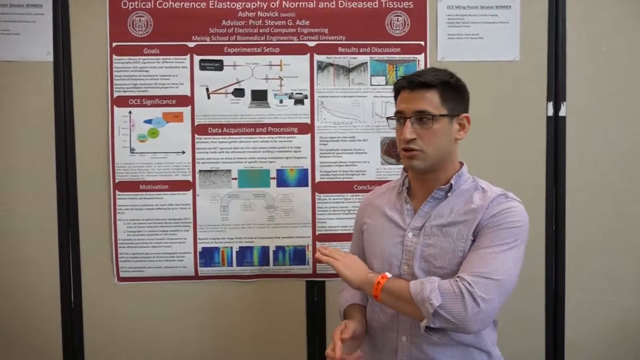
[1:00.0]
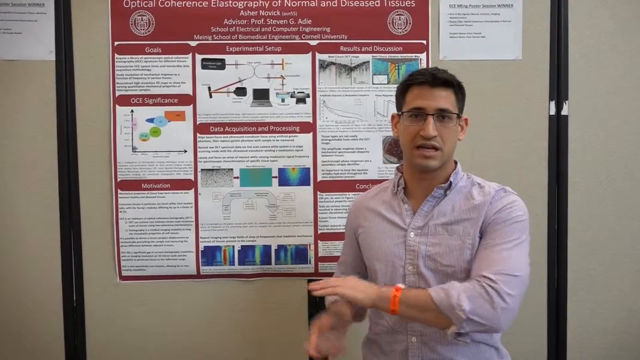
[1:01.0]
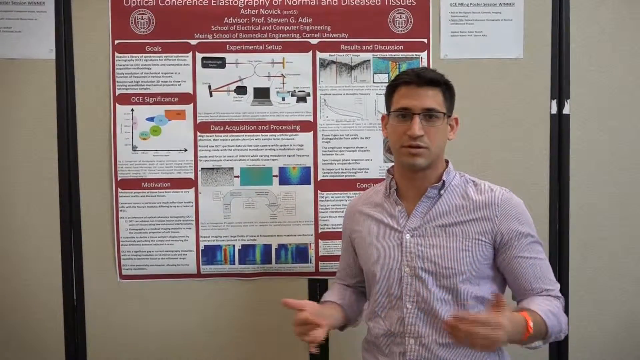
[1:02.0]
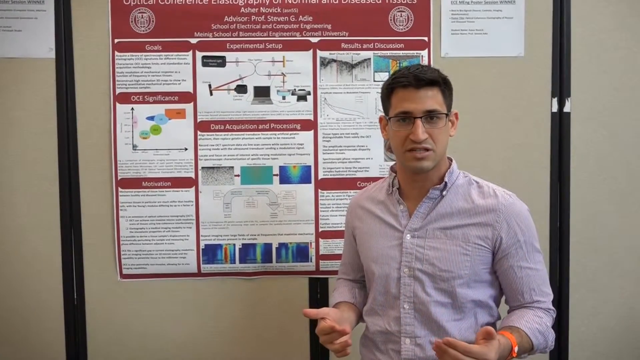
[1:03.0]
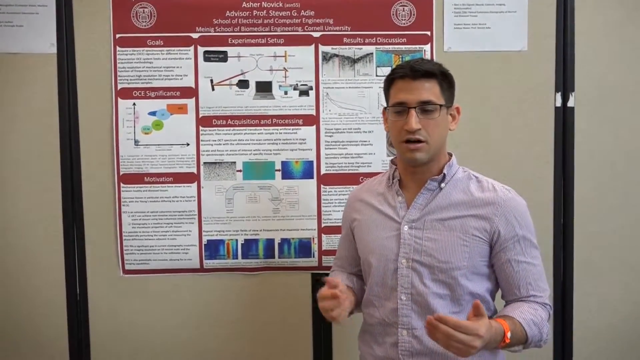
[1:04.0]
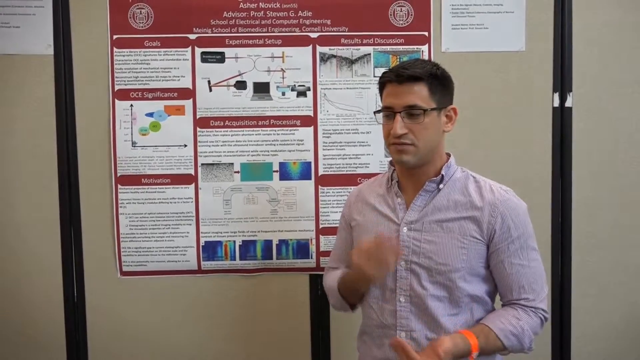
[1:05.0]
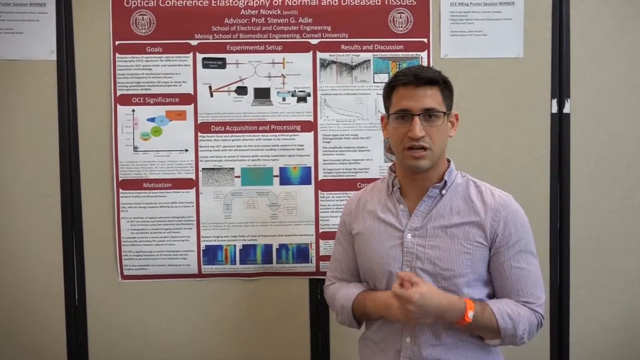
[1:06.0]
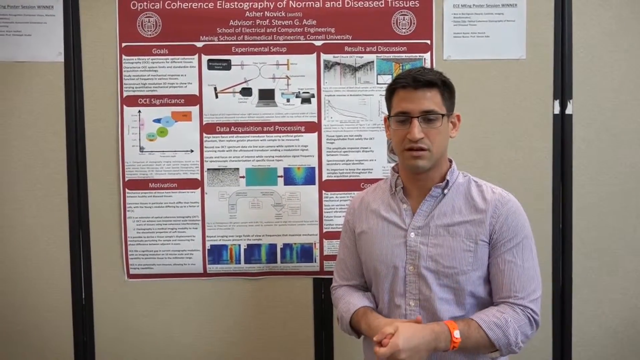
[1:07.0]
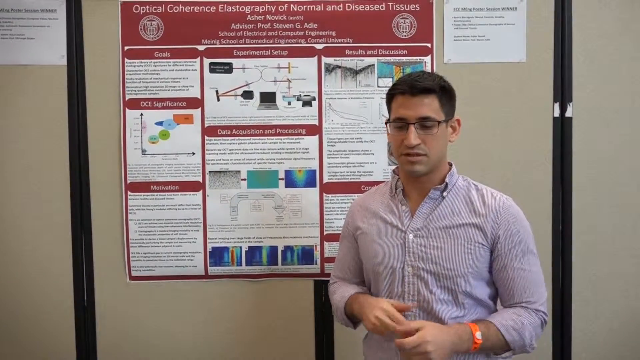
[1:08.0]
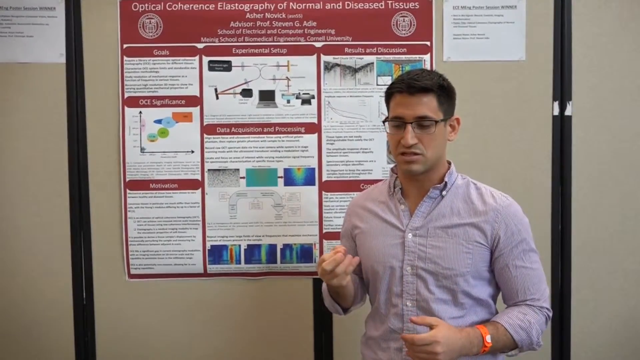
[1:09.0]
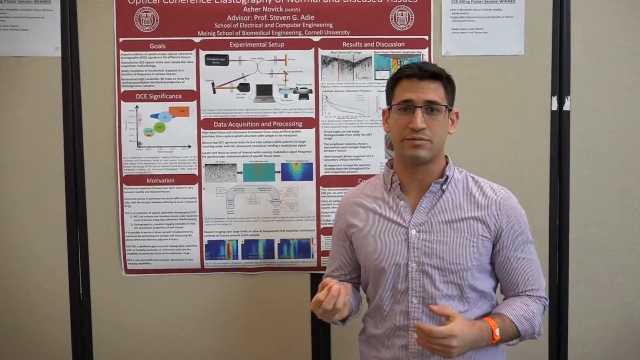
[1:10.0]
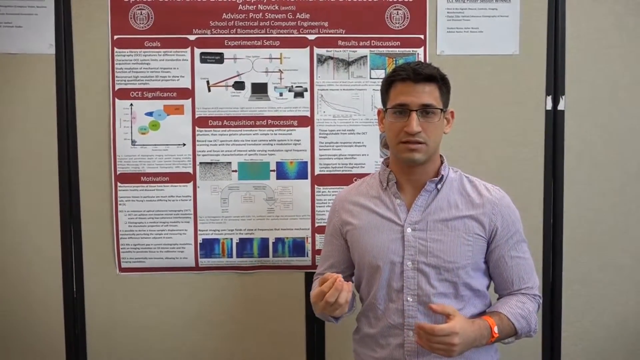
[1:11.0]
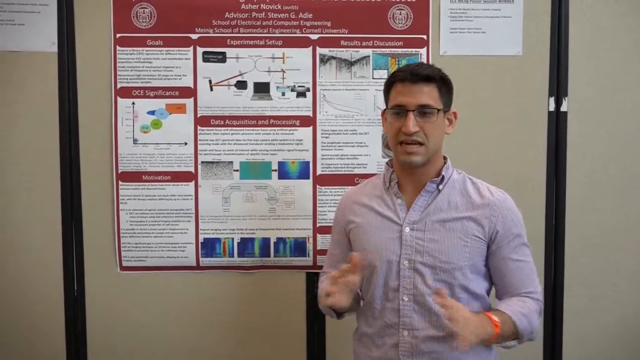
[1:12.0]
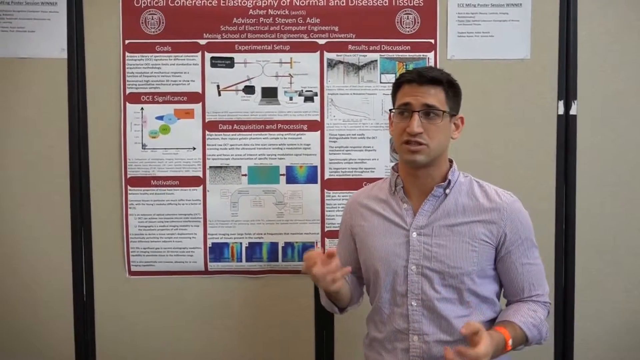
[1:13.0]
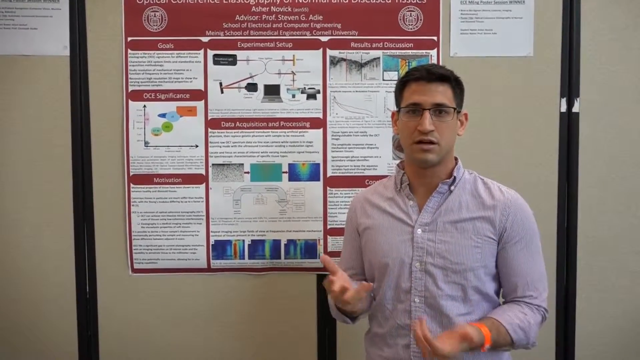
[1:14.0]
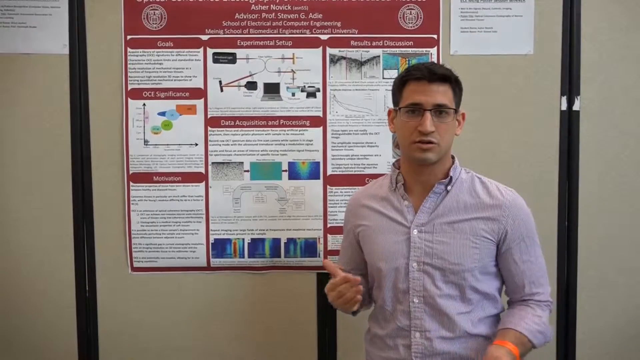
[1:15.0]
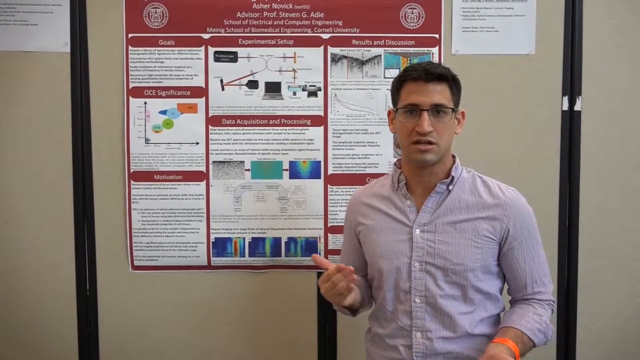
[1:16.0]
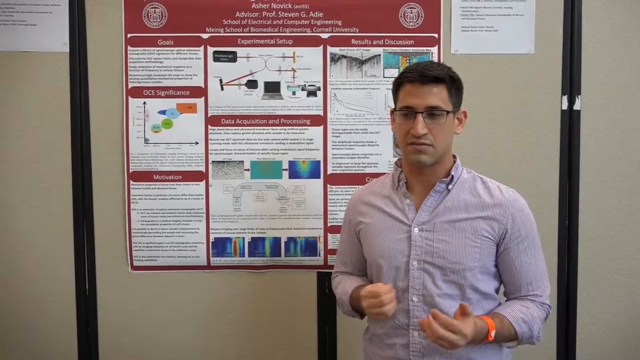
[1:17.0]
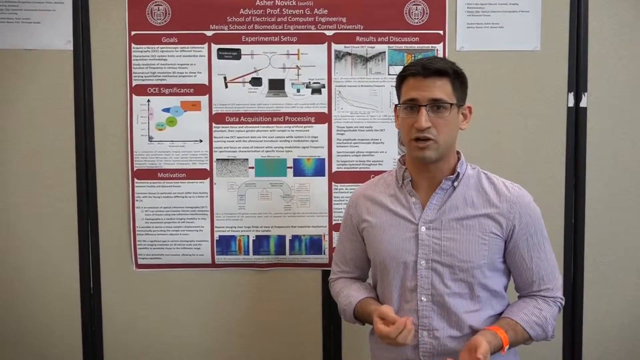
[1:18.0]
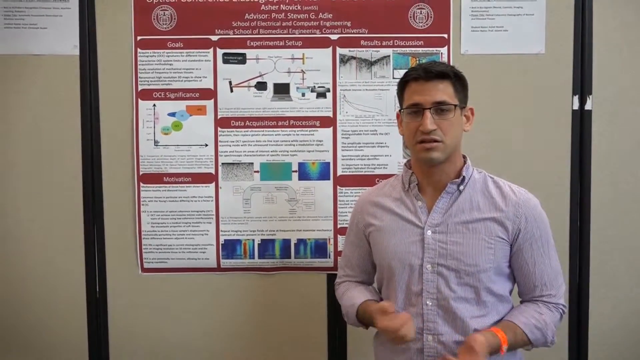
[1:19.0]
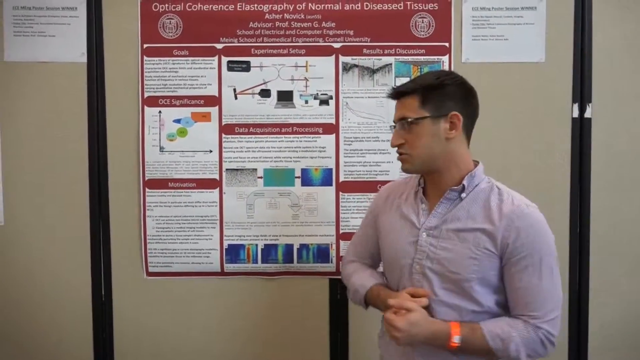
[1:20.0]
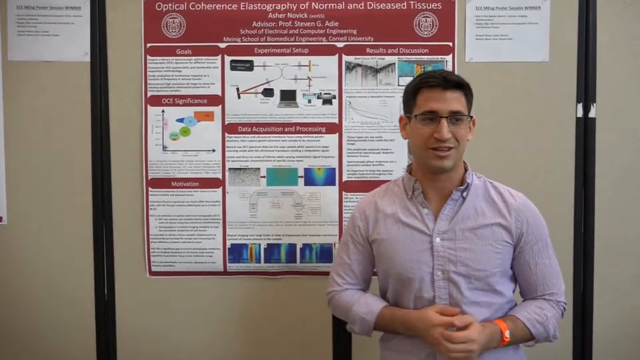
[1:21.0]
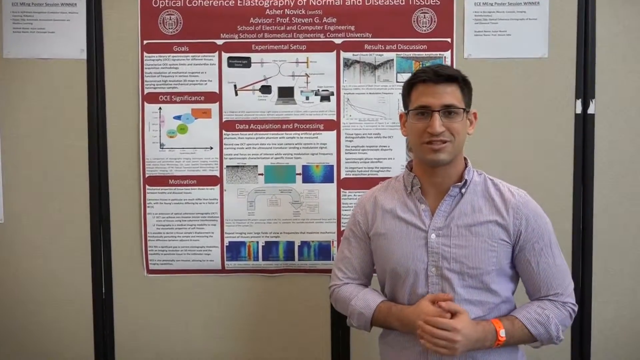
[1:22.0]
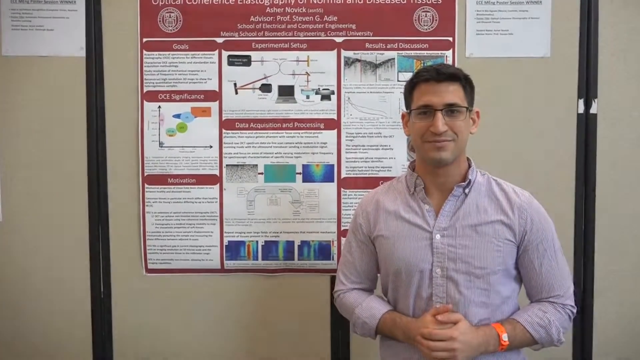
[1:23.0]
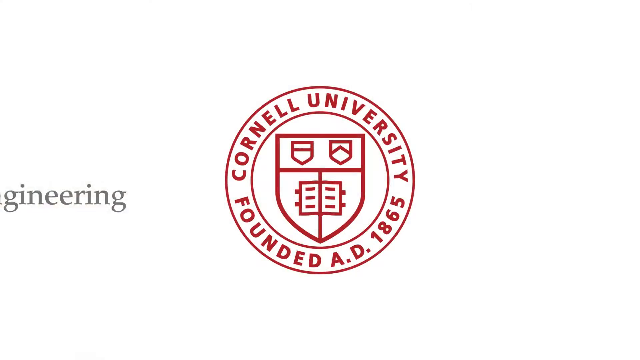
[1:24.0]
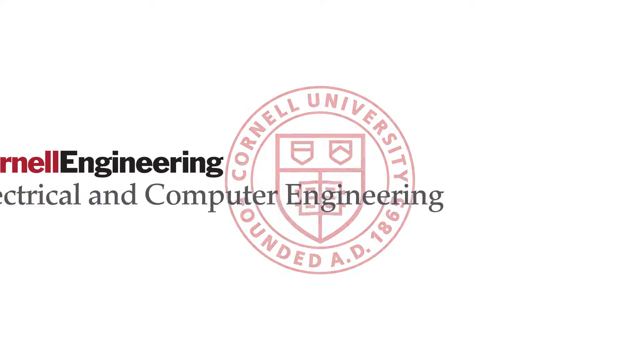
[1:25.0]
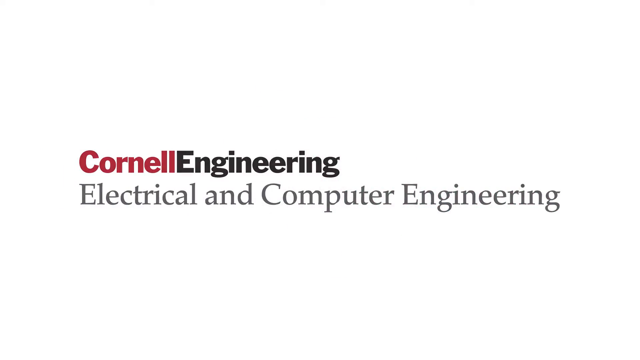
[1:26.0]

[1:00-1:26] A man talks beside a chart that reads "optical coherence elastography of normal and disease tissues," followed by the name Asher Novick and his advisor, Professor Steven G; the smaller text below is hard to read. There are two logos at the top, and the word "goals" appears. The man wears a button-down shirt and an orange wristband on his wrist. He points toward the chart, looks forward and speaks, moving his hands up and down. He holds one hand with the other, makes a circle, makes a grabbing motion and a pulling motion, then looks at the chart again. Text reads "Cornell University founded 1865" with a small logo, which then fades out, and the video returns to the man at the front talking by the chart.